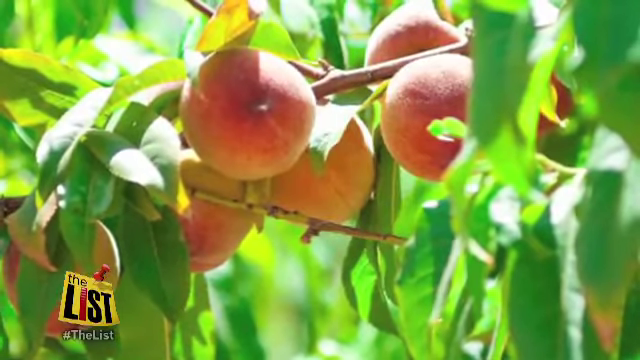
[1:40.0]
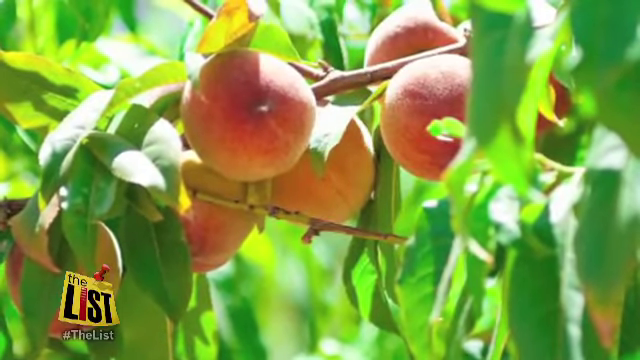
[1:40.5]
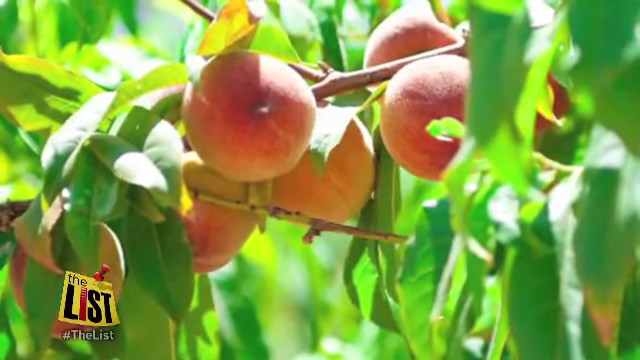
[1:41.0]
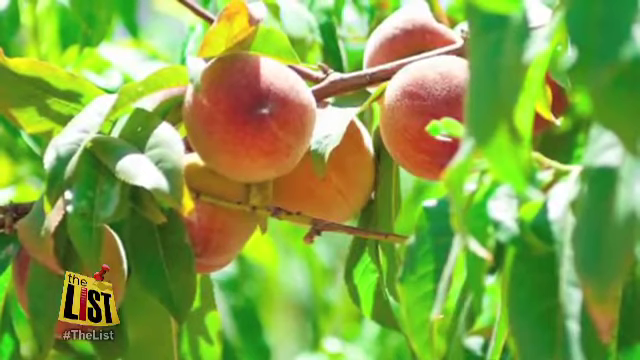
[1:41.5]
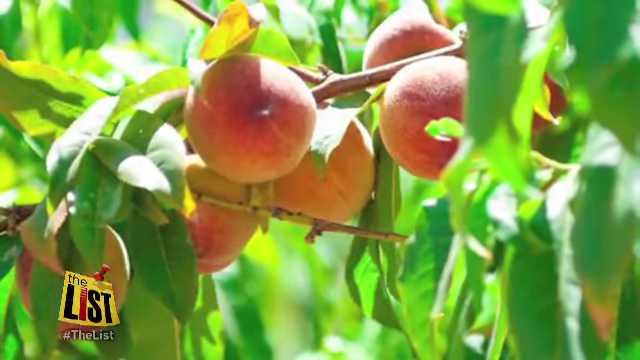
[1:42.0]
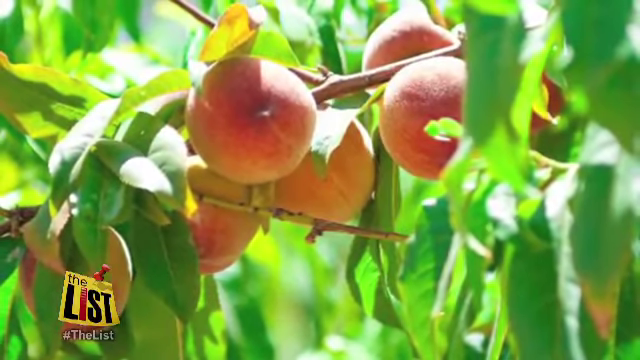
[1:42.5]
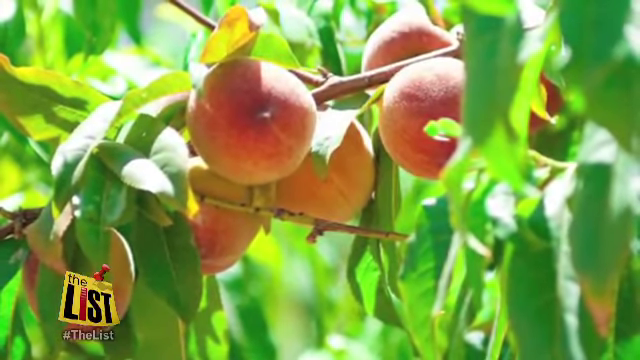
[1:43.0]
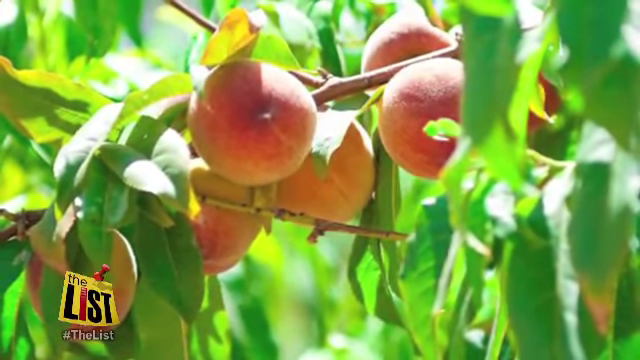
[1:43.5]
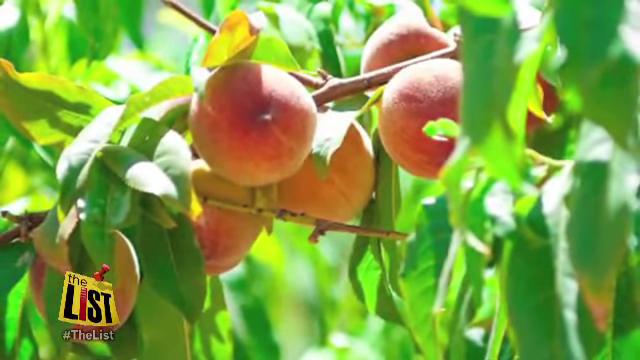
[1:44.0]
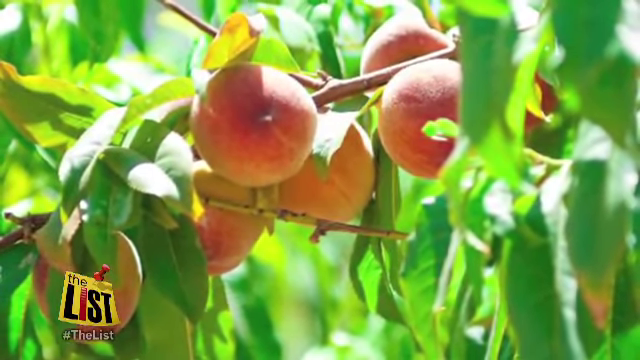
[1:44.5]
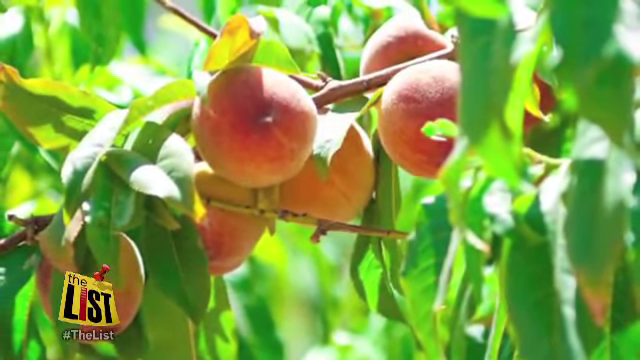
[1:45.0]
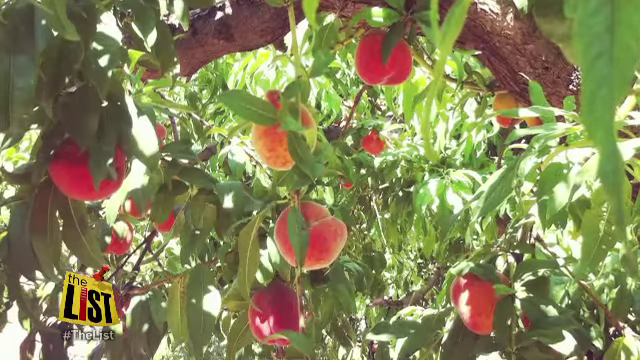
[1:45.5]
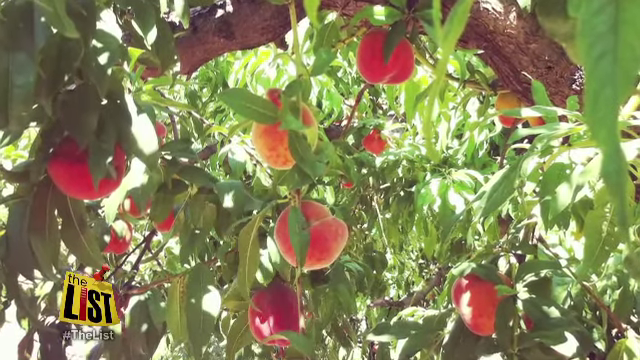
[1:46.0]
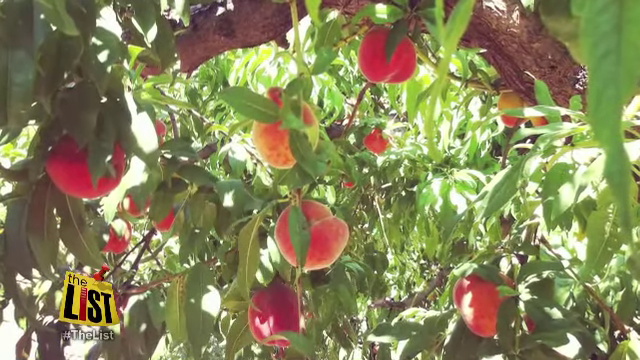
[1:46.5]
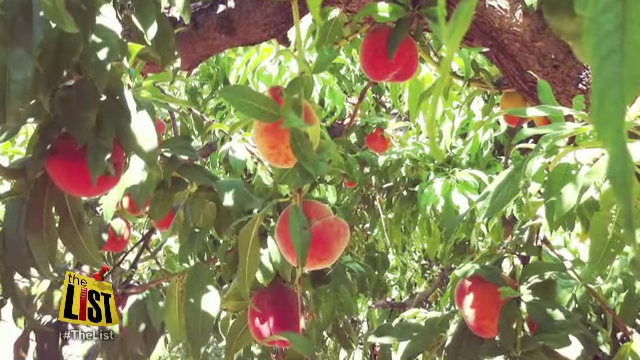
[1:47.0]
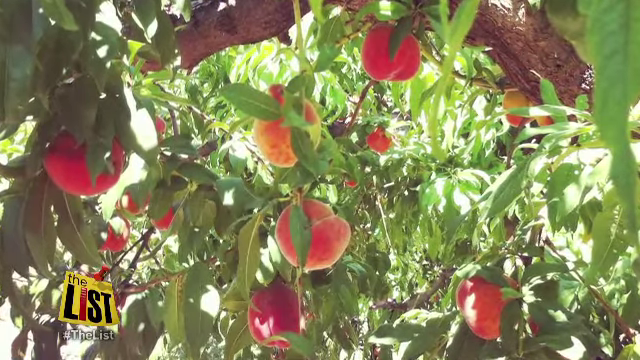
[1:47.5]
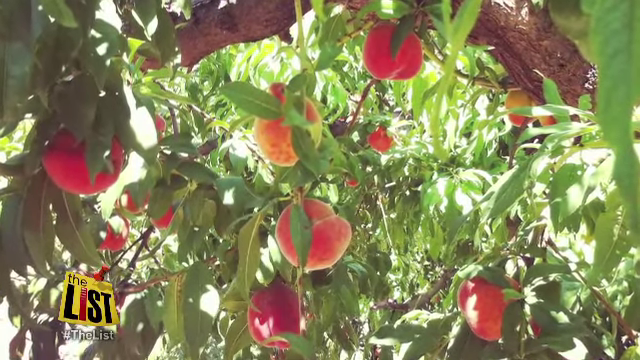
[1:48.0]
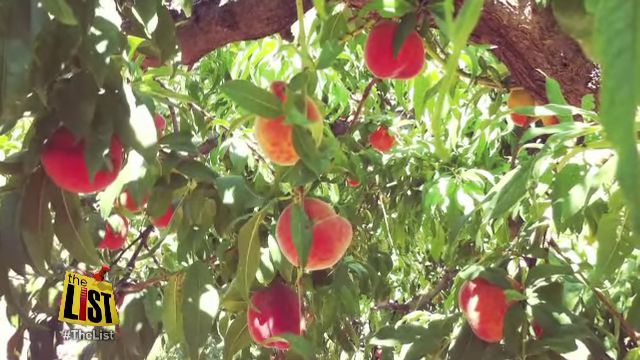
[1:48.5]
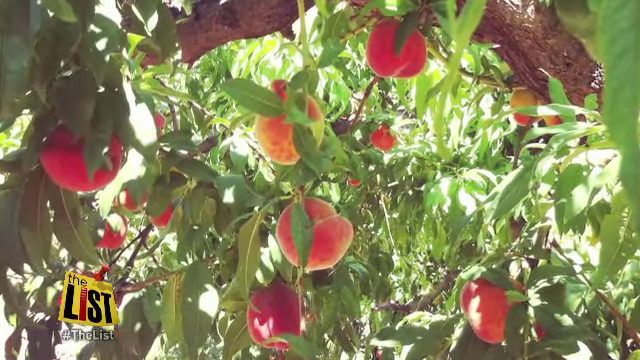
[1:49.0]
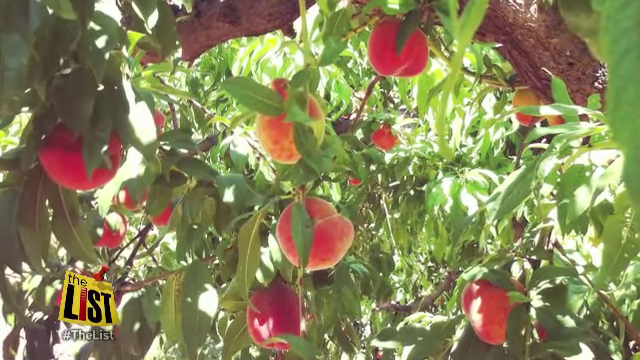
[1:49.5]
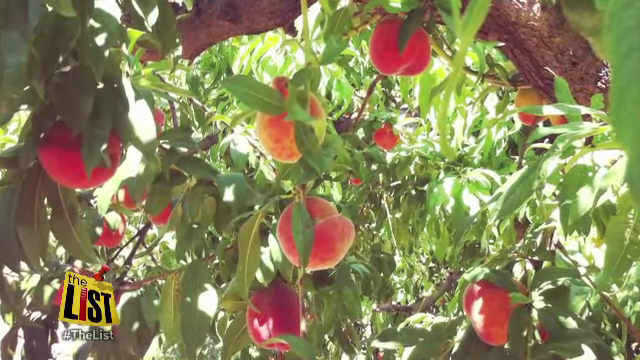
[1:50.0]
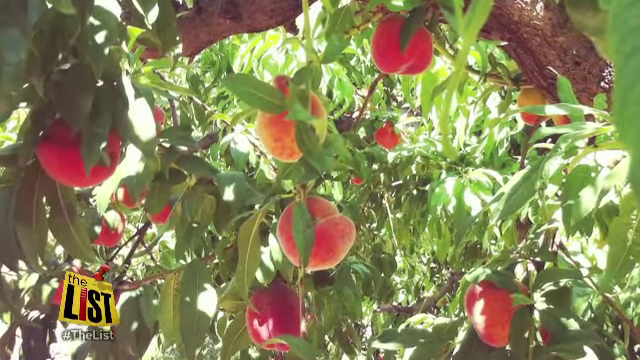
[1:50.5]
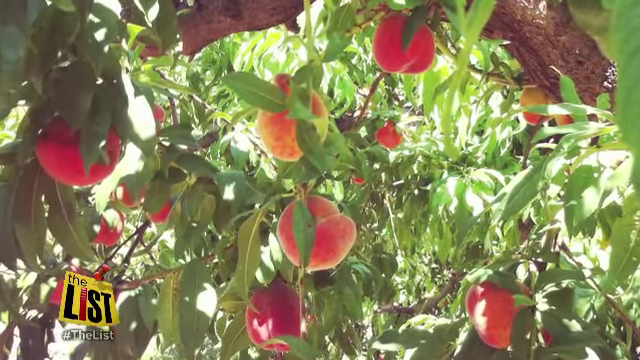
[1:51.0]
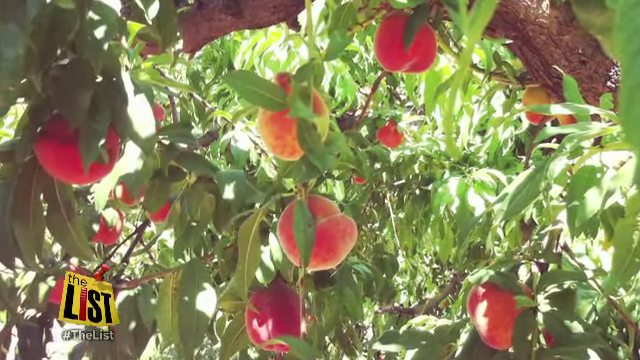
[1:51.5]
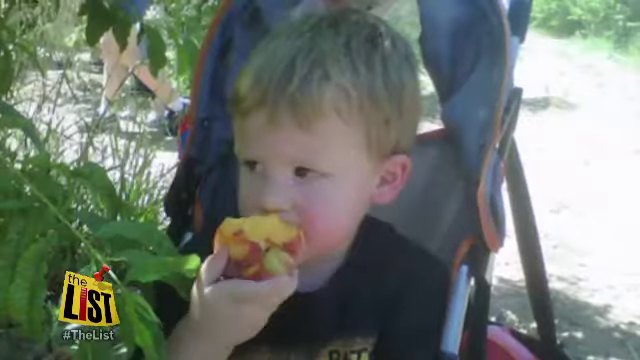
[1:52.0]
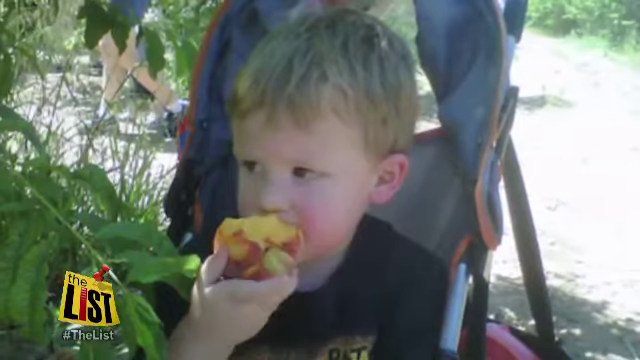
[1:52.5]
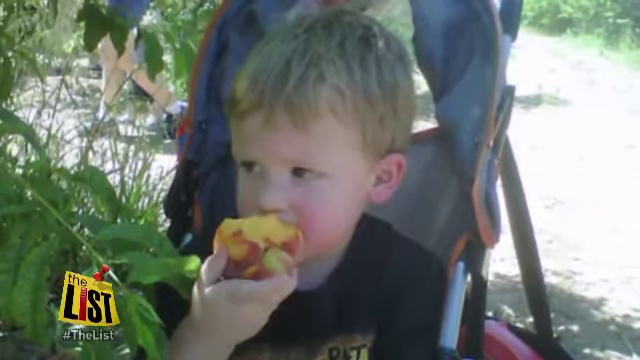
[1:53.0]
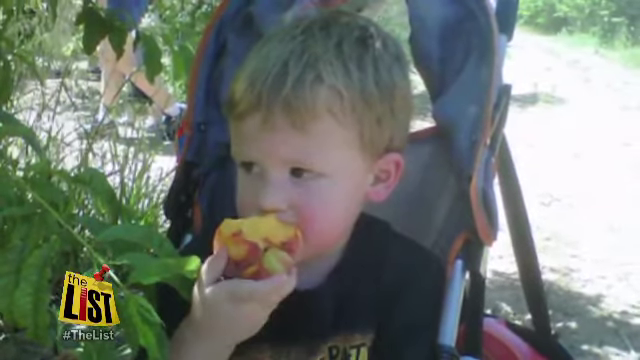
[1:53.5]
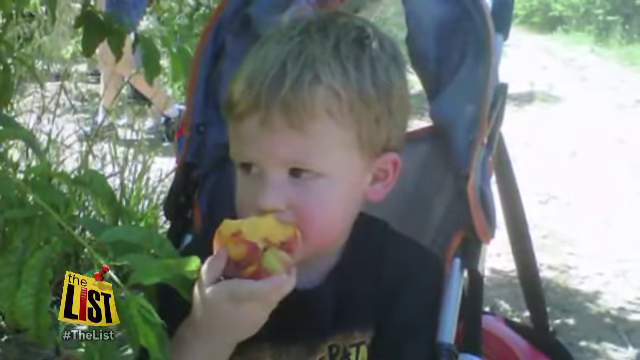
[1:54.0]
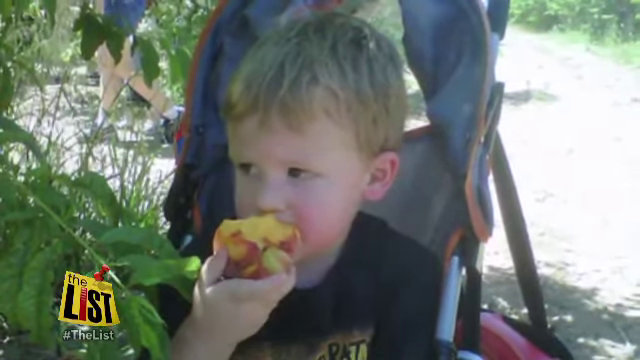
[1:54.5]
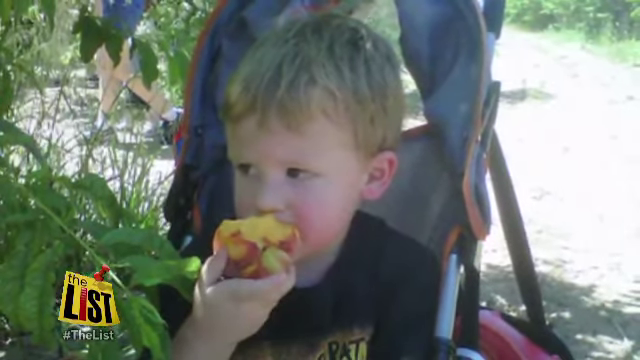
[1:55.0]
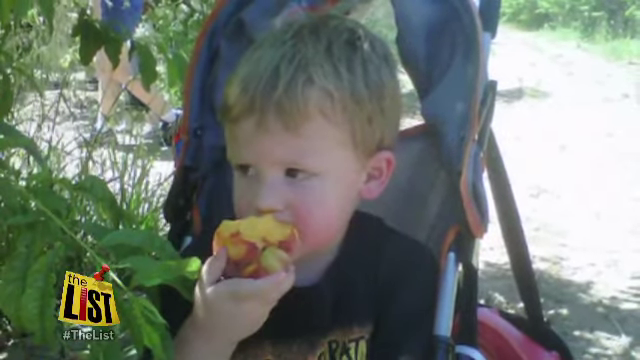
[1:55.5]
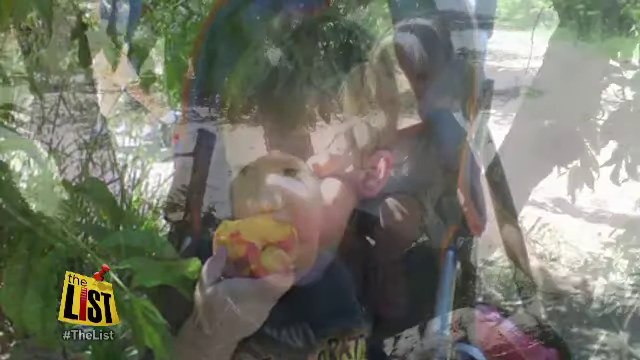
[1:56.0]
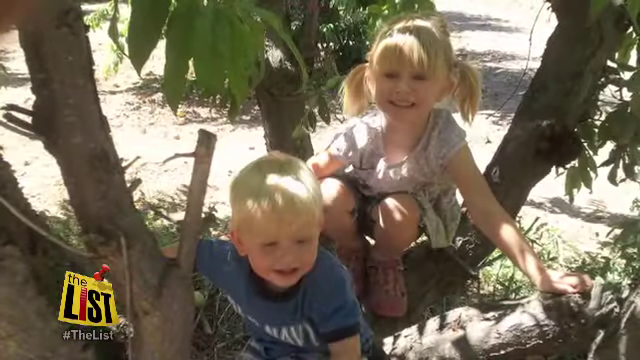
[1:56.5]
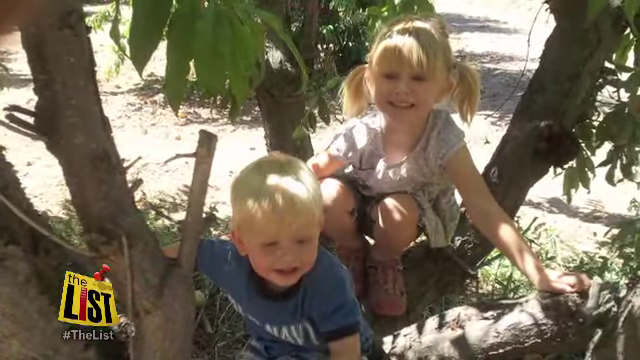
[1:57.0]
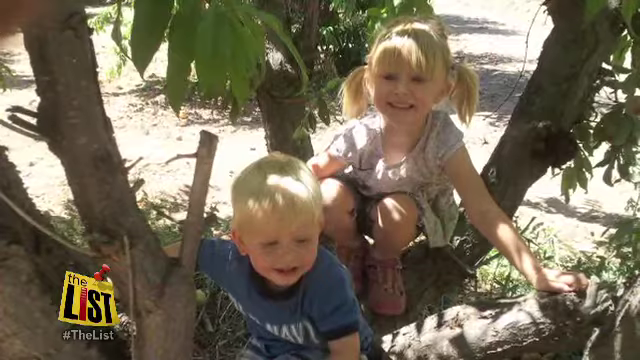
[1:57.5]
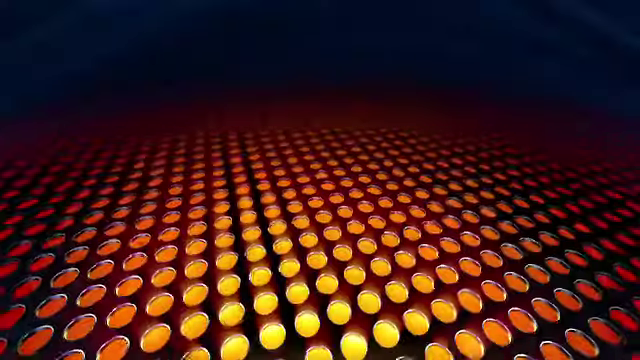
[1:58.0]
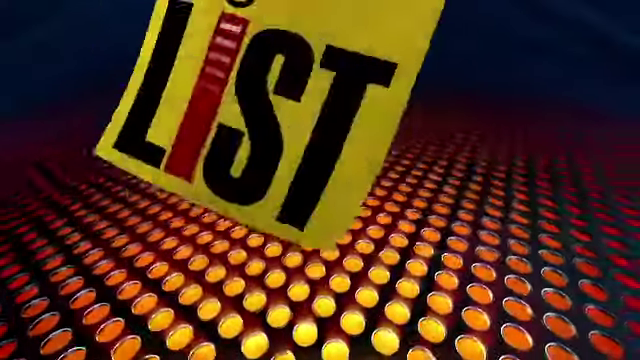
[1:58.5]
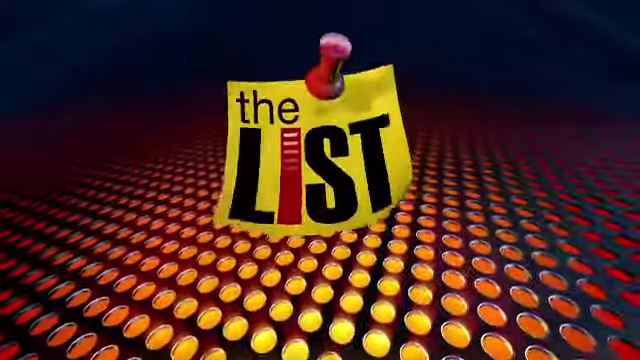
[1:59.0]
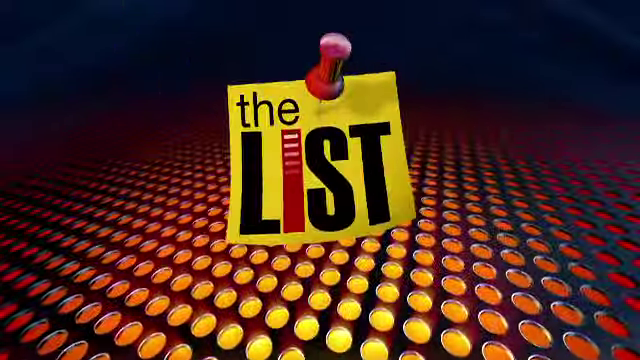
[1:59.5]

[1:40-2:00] A close-up of a peach tree shows six or seven peaches that look ripe for picking, with vivid green leaves and thin light brown branches. In the lower left corner is the news program logo, "the list" on a yellow rectangle in black and red text, and below it "#the list" in white text. The camera pans to different images of the peach tree. A young boy is shown sitting in a stroller eating a peach, followed by a scene of a very blonde boy and girl close in age, perhaps three and four, sitting at the base of a peach tree with sunlight hitting the tops of their heads. The ground beneath the tree is primarily dirt rather than grass. At the end of the video, the show's opening background appears, black with red circles and yellow circles, followed by a large version of the logo: a yellow square that reads "the list" with a red push pin on top, looking somewhat three-dimensional.